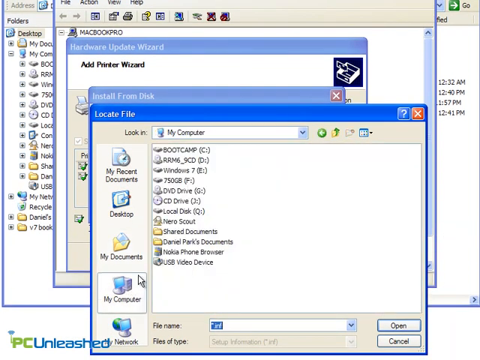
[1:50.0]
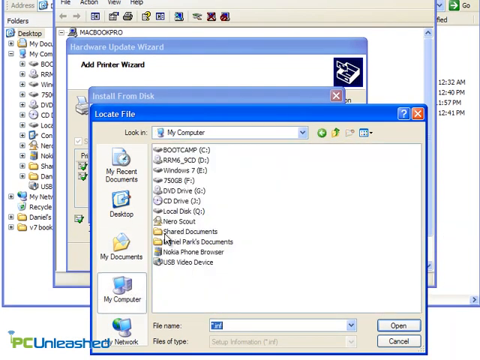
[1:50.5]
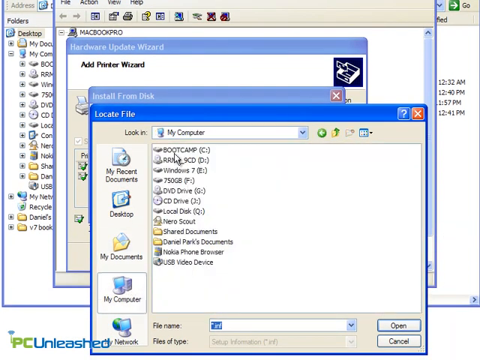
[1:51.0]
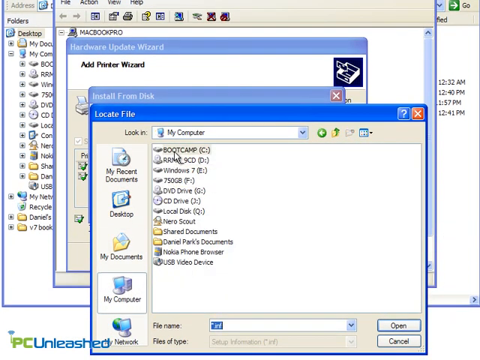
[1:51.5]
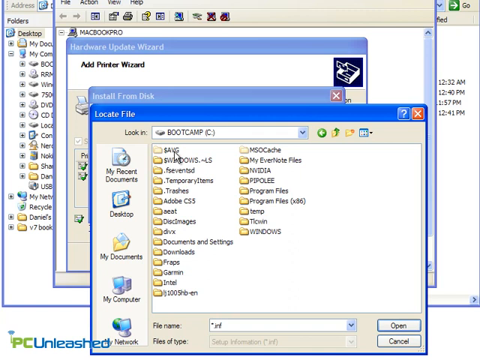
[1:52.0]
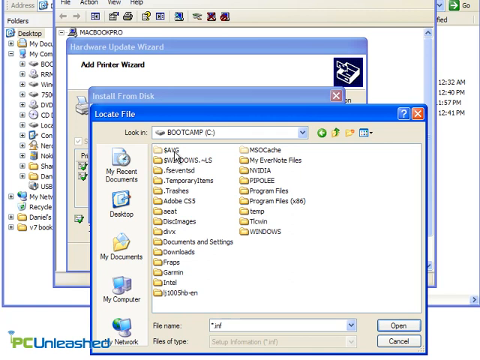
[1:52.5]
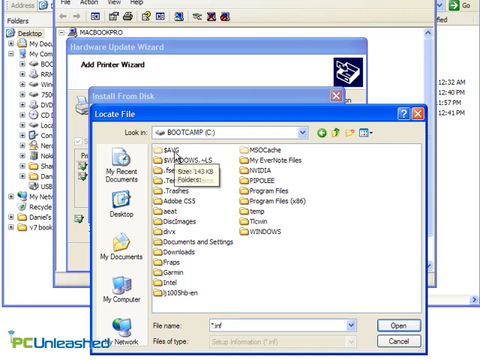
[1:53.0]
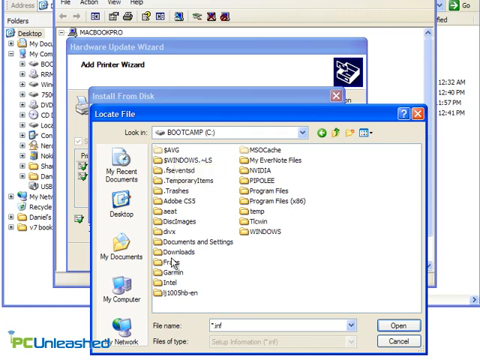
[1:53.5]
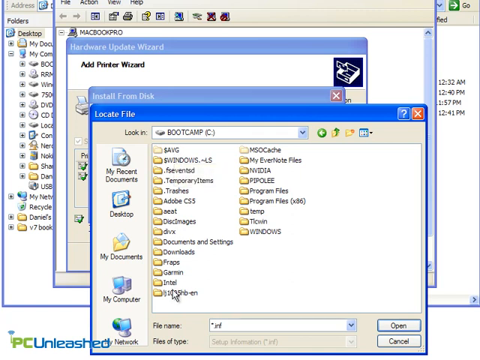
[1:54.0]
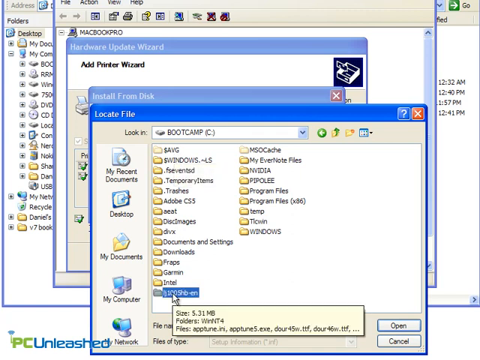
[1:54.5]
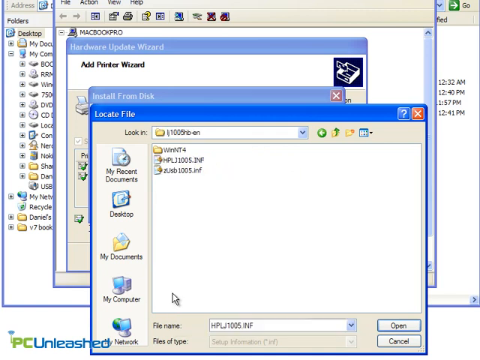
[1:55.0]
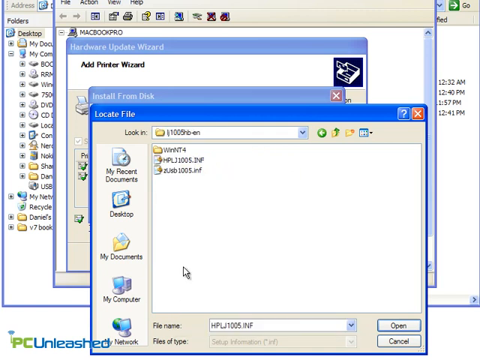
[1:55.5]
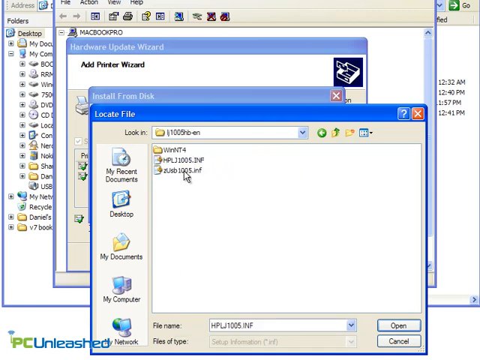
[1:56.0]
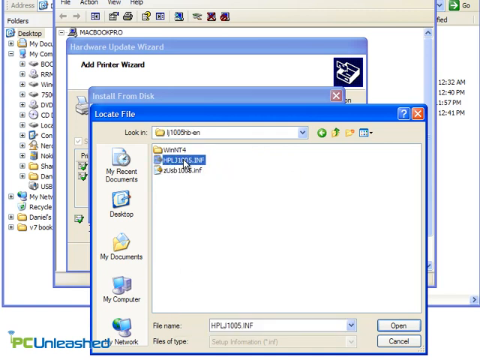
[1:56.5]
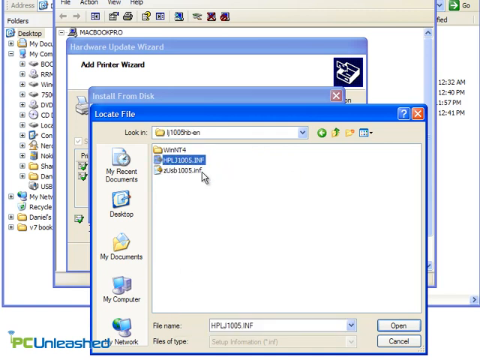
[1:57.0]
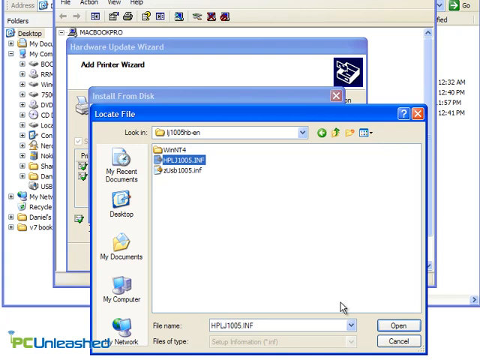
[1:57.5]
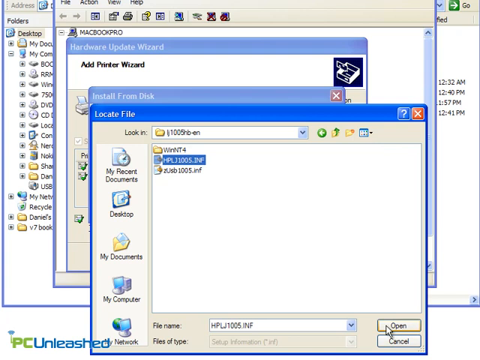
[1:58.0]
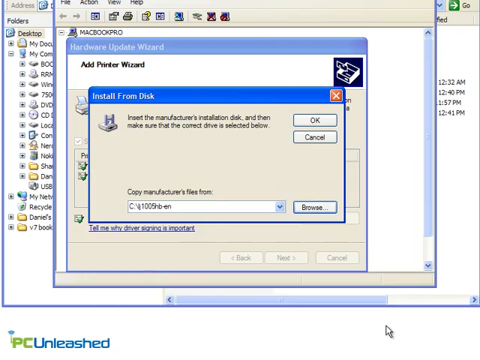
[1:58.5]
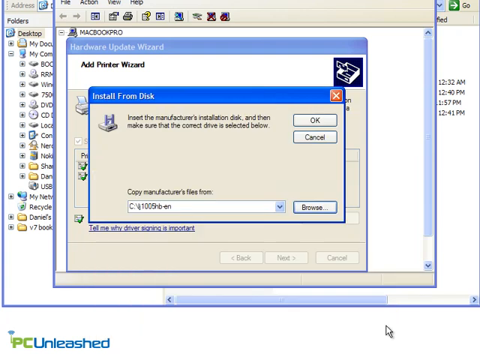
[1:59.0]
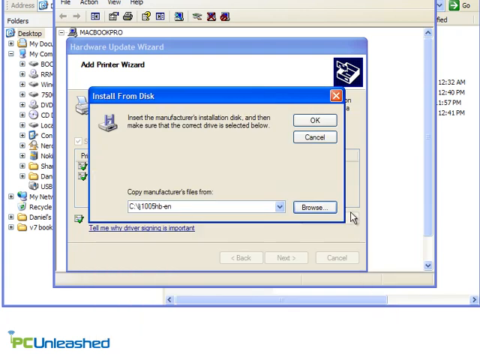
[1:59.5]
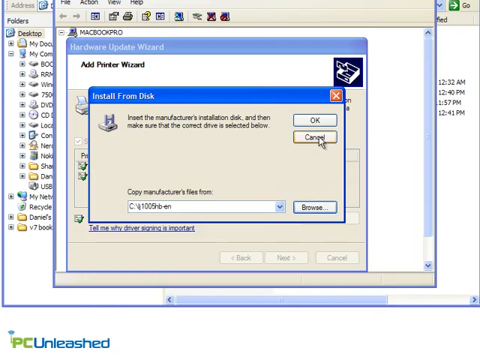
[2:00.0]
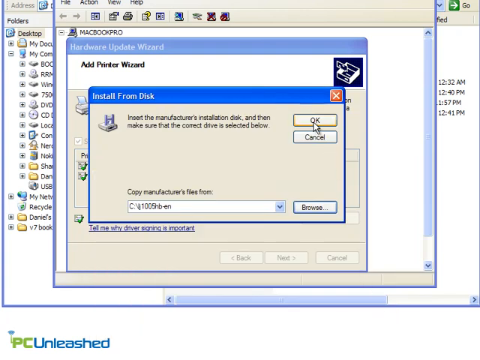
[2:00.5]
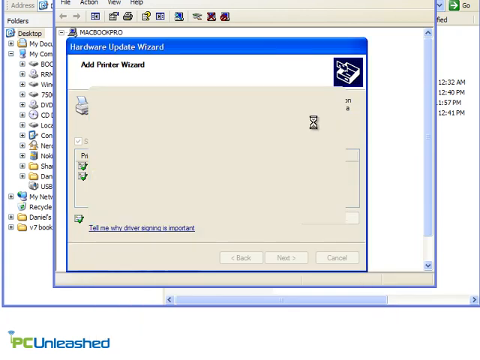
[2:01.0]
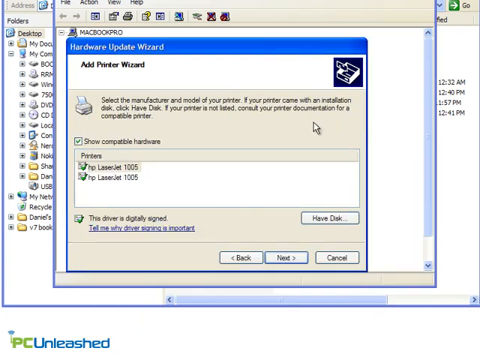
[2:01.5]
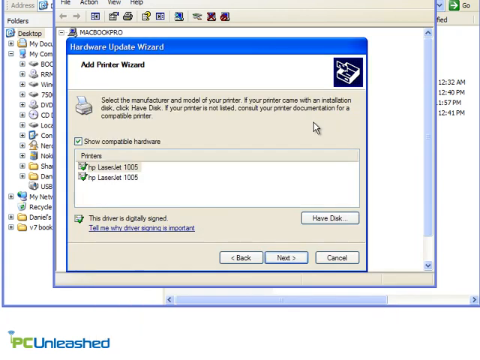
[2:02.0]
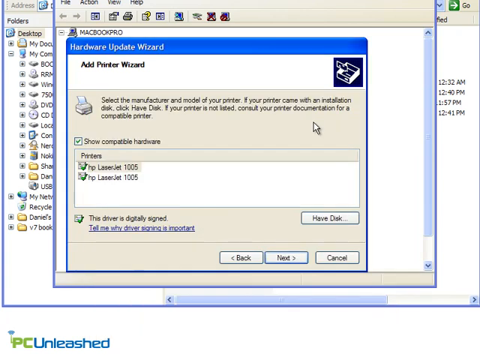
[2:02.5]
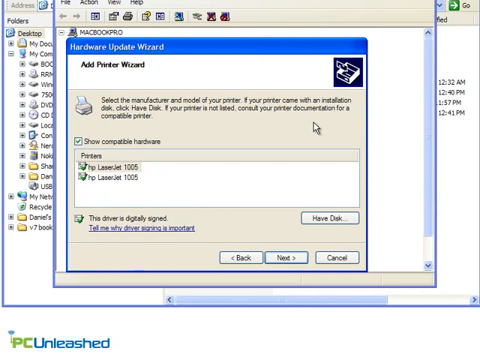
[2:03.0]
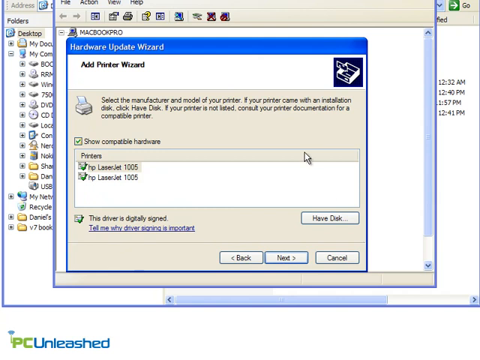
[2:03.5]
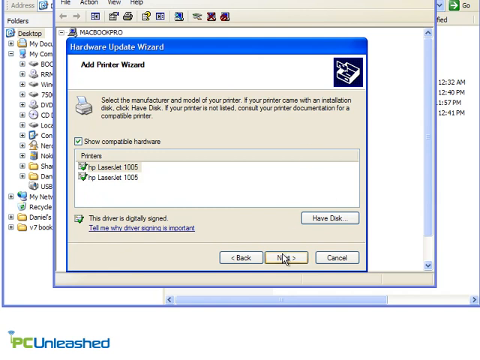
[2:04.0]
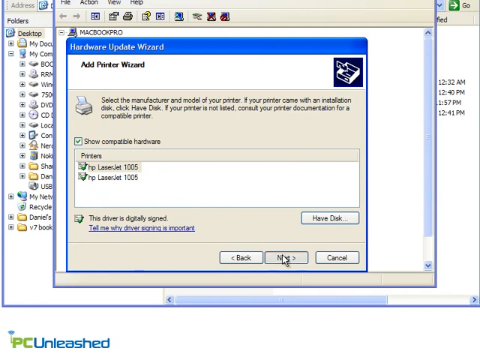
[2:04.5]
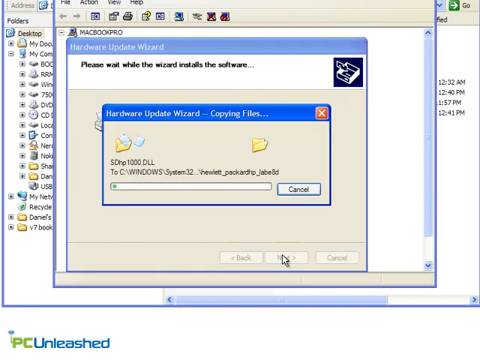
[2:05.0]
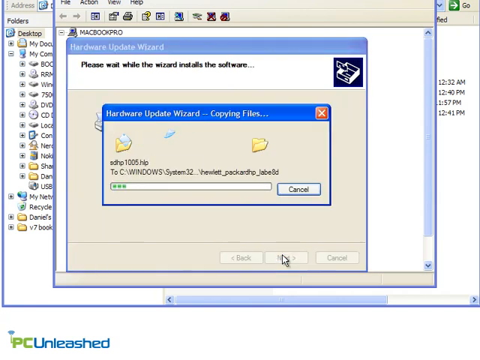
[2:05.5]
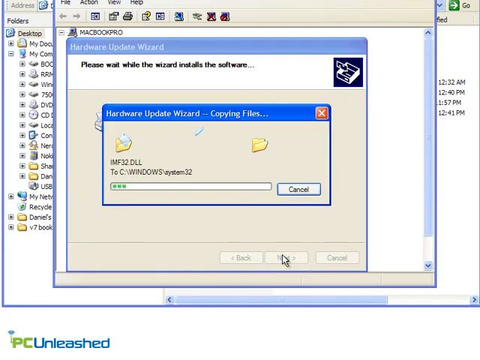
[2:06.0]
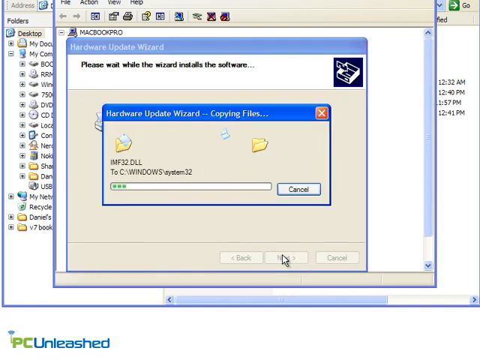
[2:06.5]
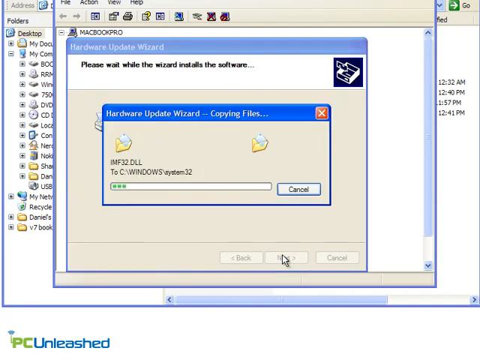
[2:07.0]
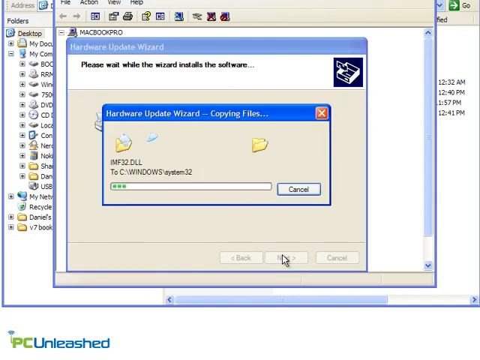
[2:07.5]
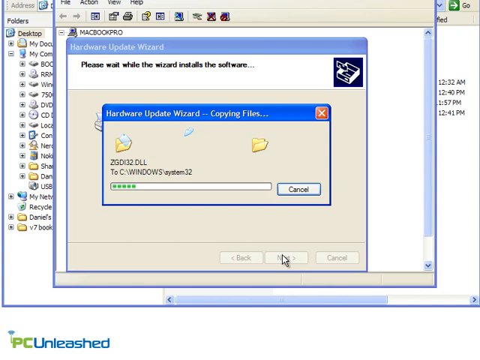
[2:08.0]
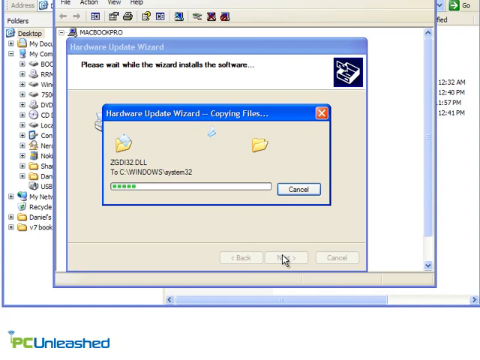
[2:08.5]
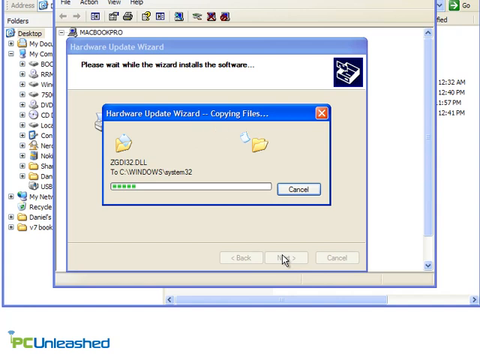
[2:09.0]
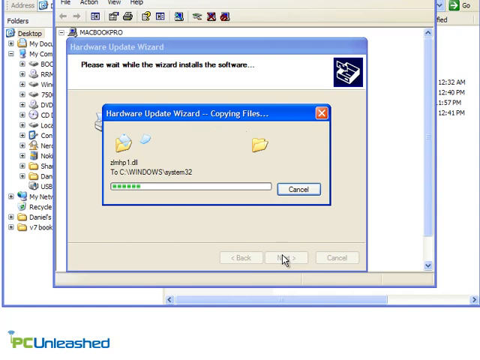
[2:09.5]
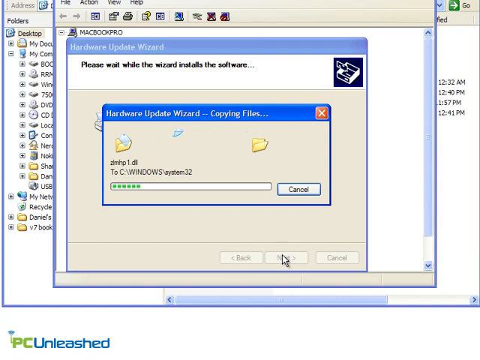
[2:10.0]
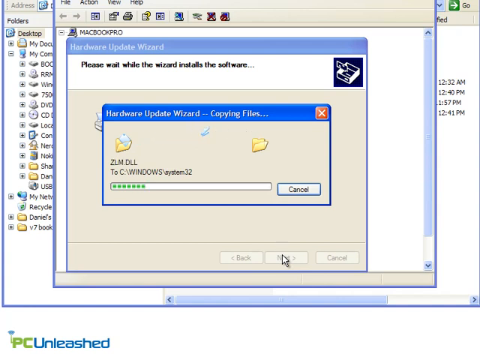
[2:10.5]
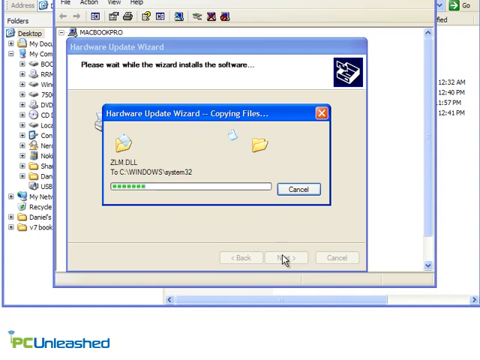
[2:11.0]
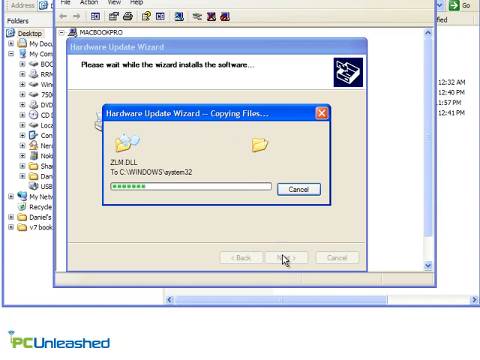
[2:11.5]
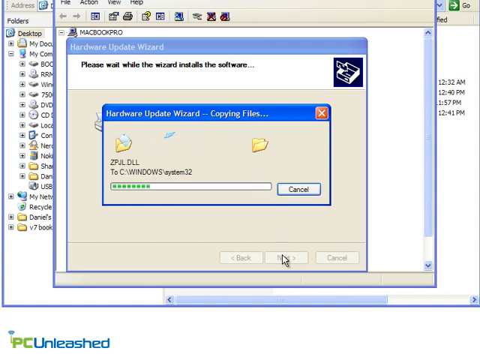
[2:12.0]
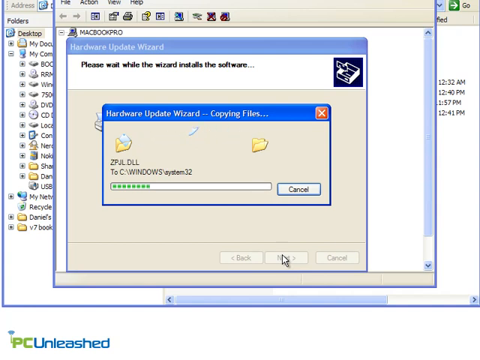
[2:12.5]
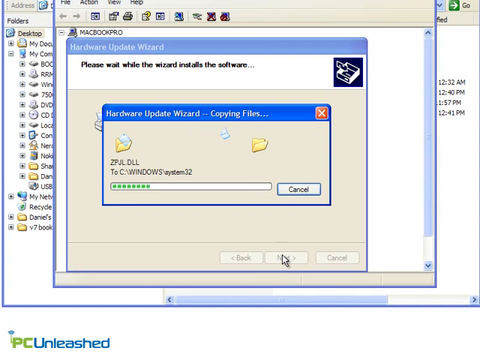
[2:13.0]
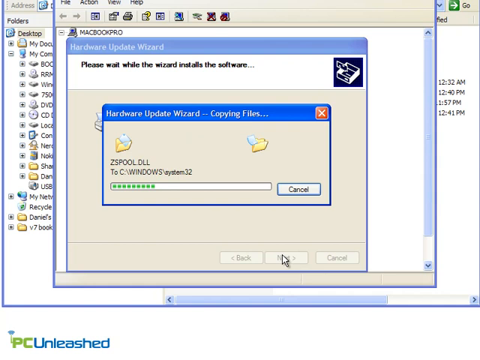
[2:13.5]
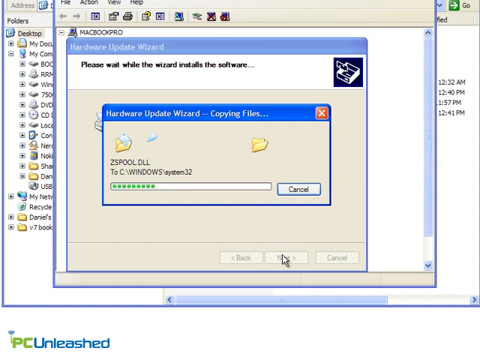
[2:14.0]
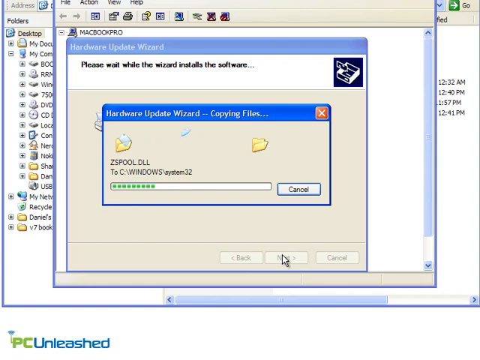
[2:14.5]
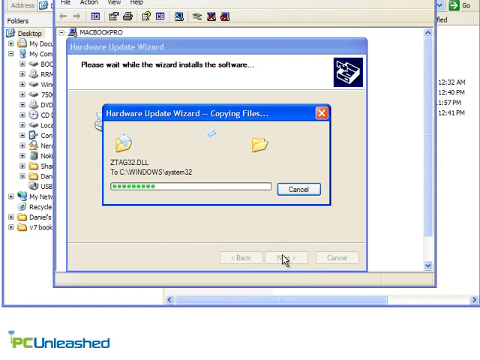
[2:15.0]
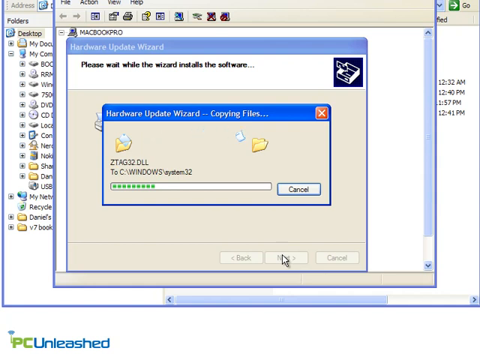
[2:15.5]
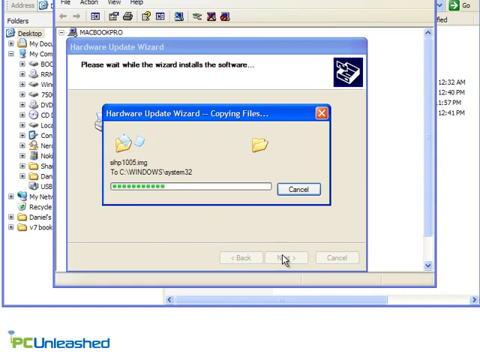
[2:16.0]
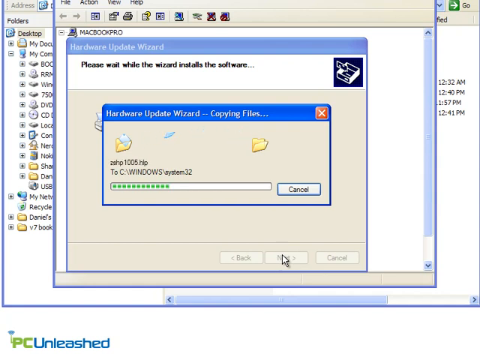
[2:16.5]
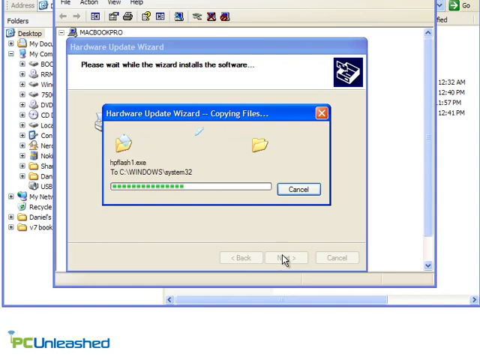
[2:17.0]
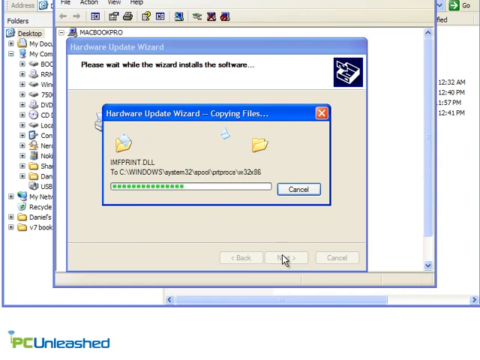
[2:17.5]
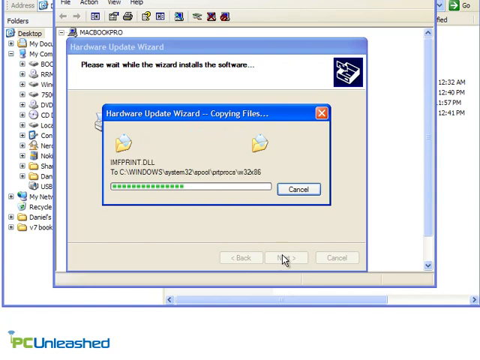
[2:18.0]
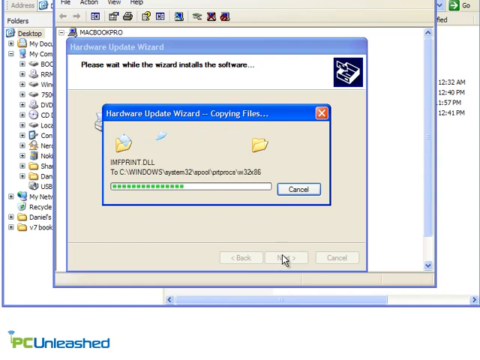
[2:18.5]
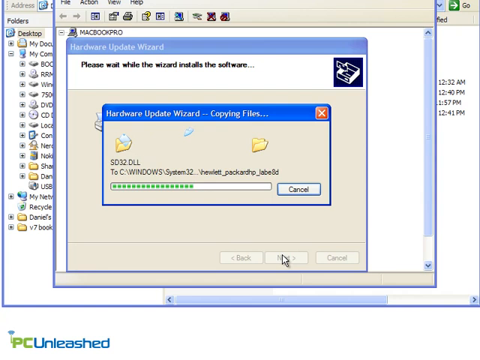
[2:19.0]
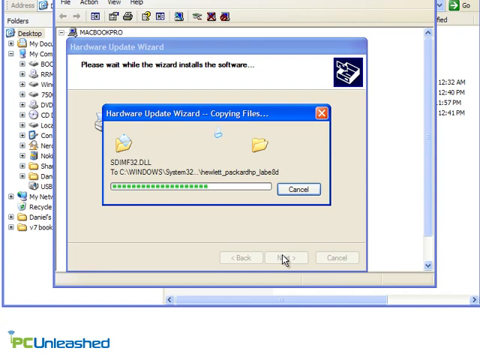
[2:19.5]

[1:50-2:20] While locating the files, My Computer is clicked and a bootcamp drive is chosen from the available disks. Inside it, the file at the bottom of the list is opened. Three options appear, and the one starting with "$hp" is clicked once. Back in the install from disk window, OK is clicked, the disk is selected, and Next is clicked. The Hardware Update Wizard then works, with files shown flying to the Windows system32 folder, and a green progress bar fills at the bottom.